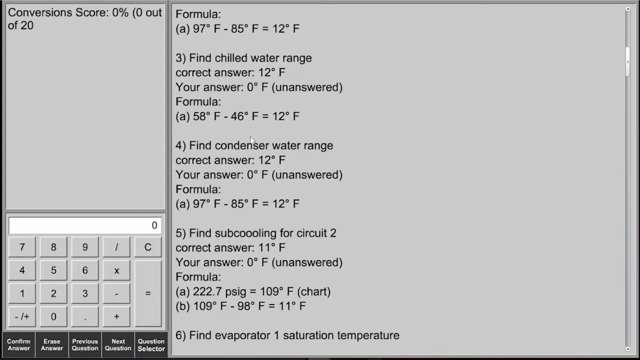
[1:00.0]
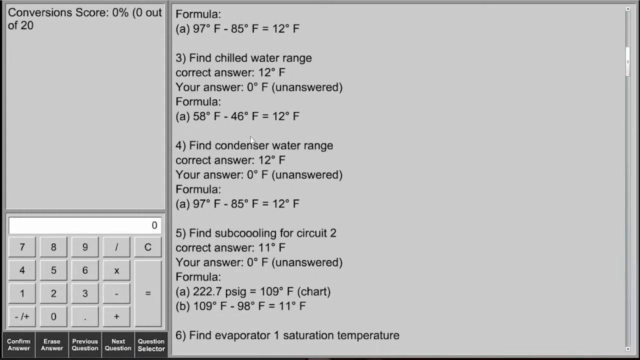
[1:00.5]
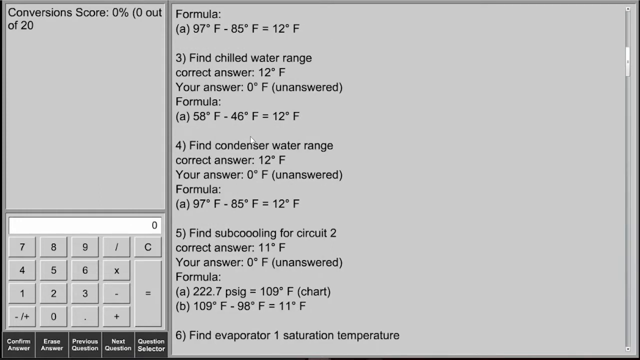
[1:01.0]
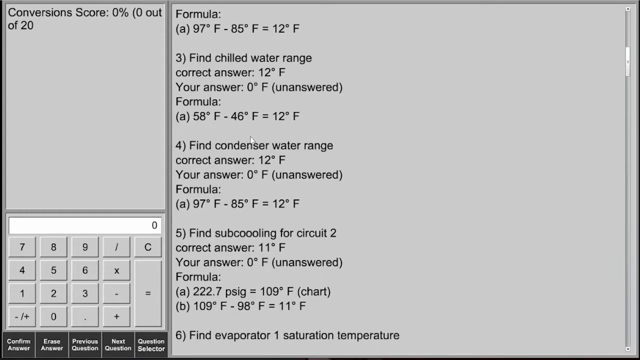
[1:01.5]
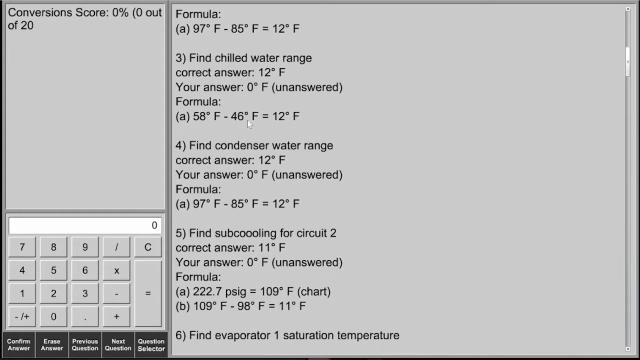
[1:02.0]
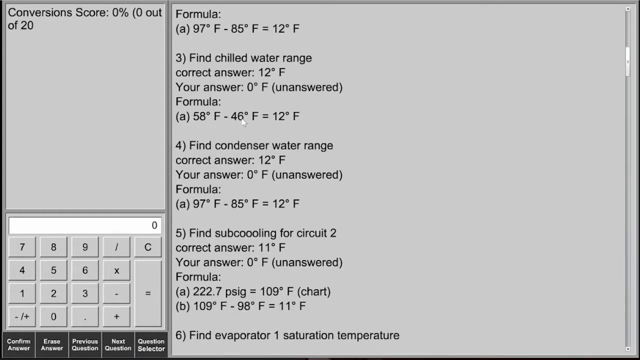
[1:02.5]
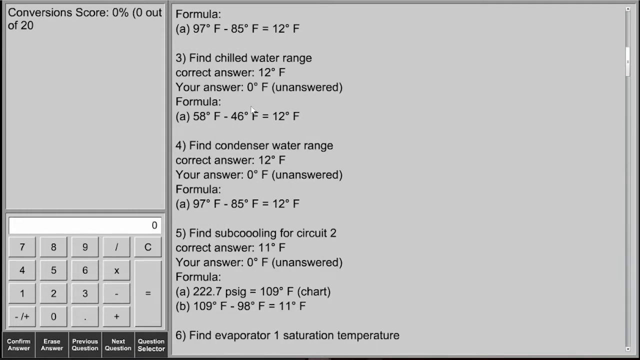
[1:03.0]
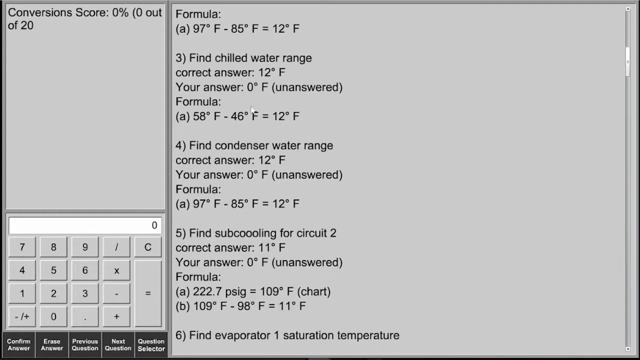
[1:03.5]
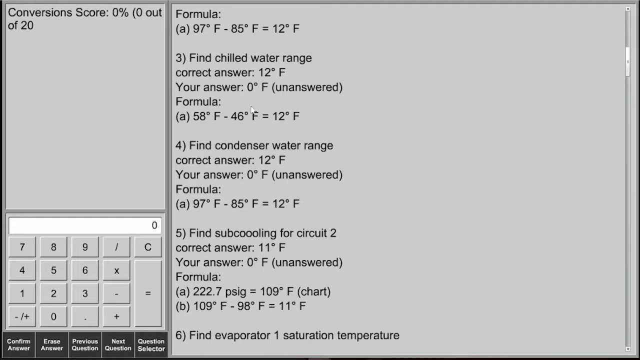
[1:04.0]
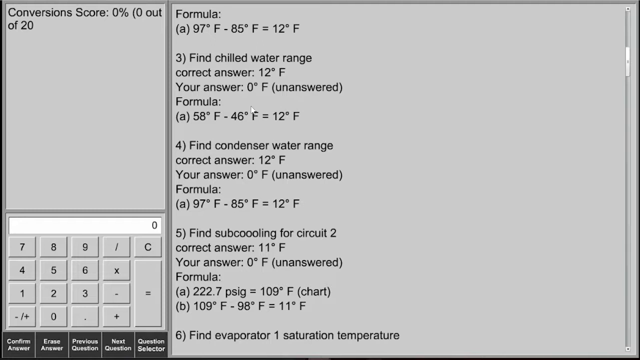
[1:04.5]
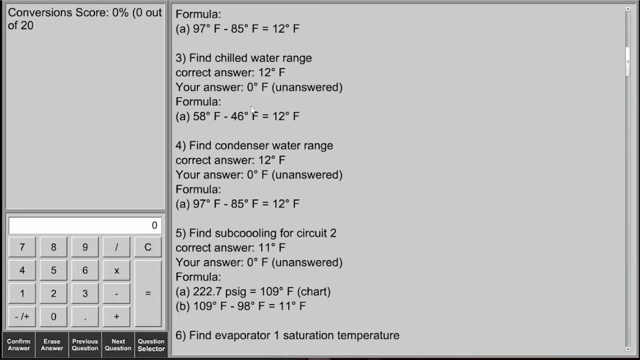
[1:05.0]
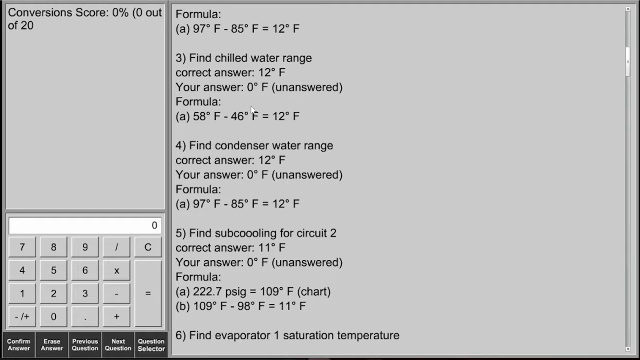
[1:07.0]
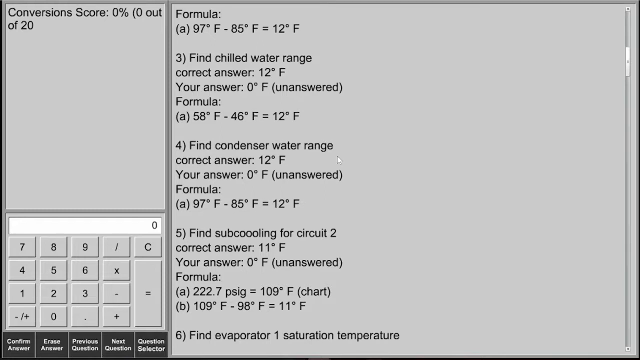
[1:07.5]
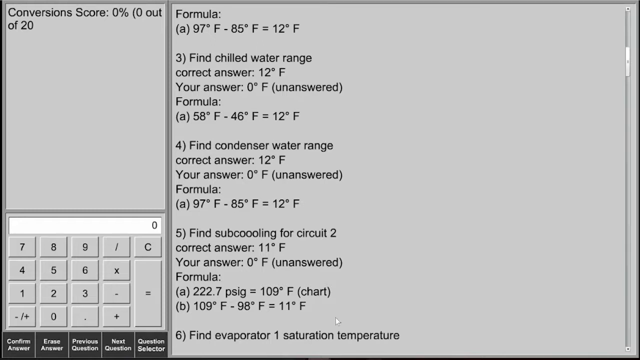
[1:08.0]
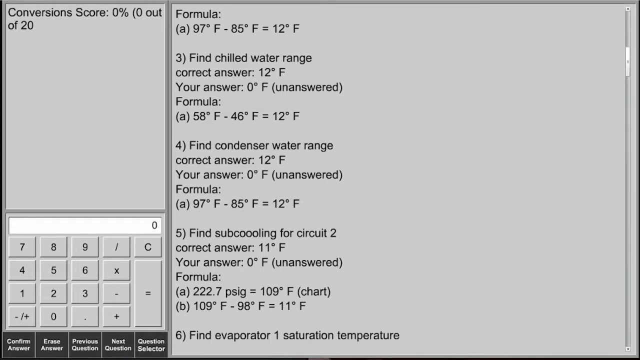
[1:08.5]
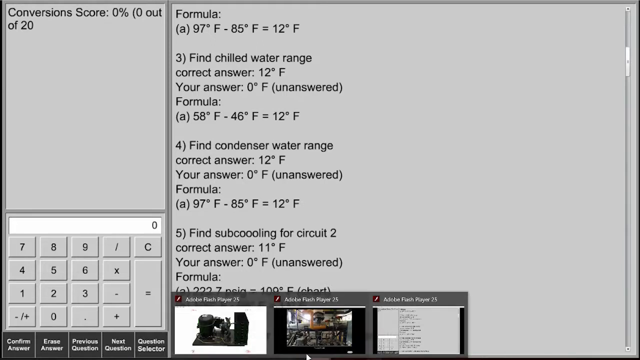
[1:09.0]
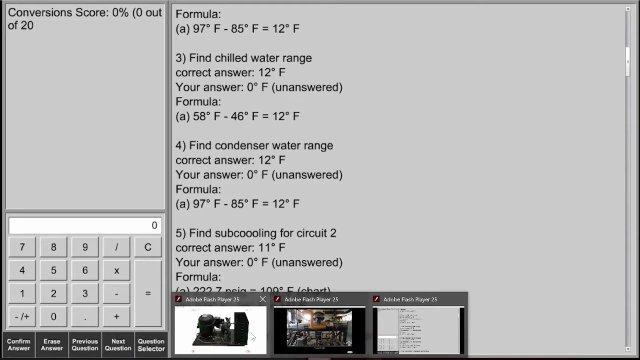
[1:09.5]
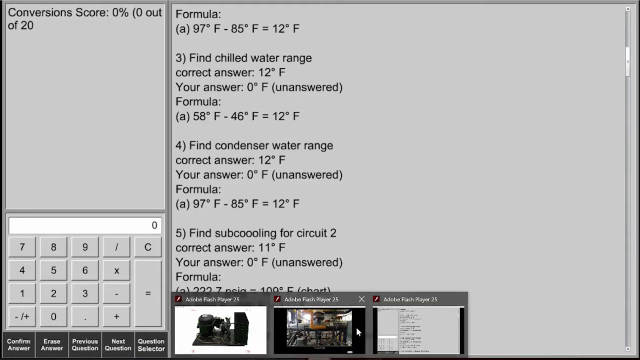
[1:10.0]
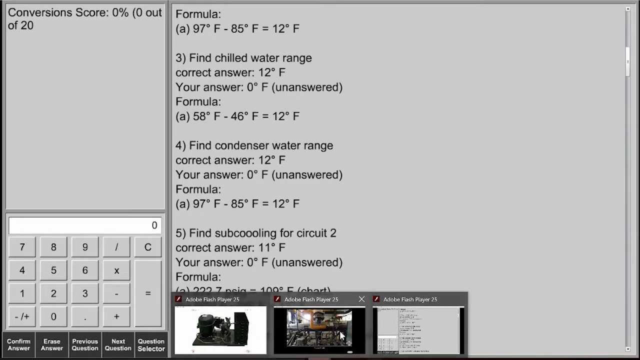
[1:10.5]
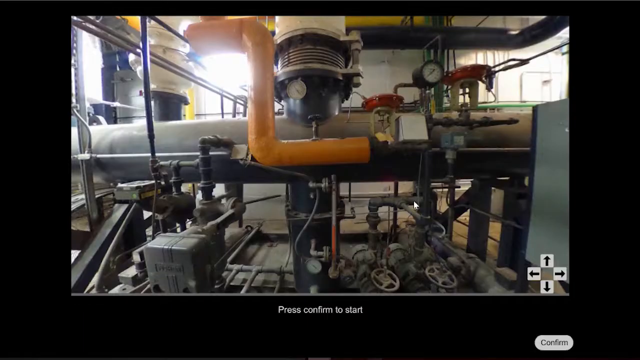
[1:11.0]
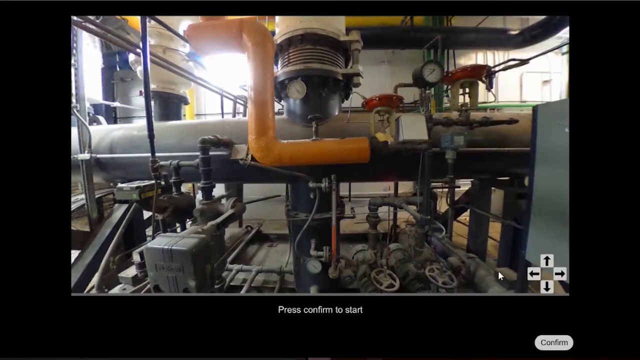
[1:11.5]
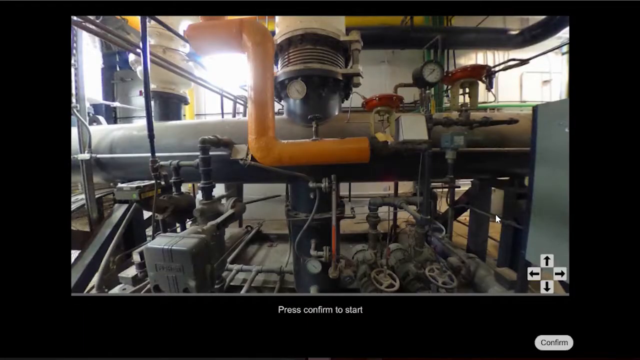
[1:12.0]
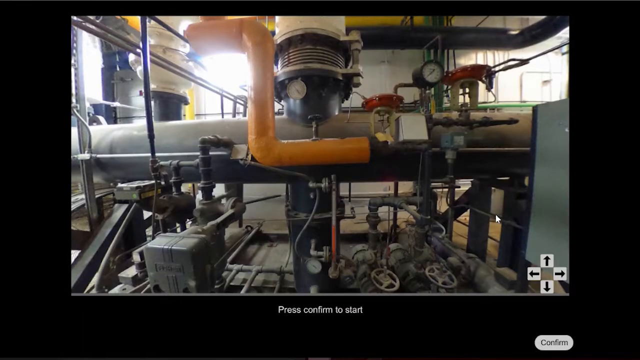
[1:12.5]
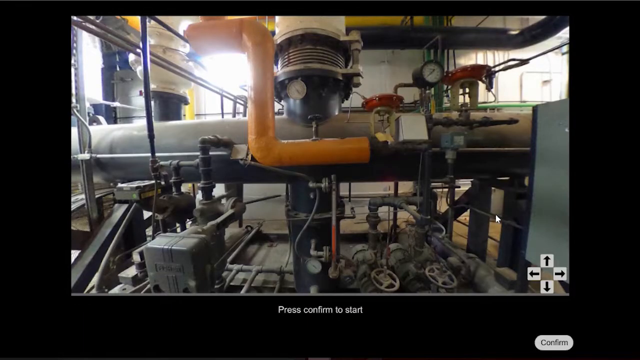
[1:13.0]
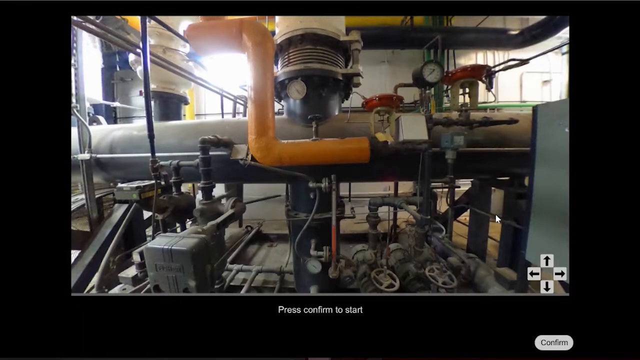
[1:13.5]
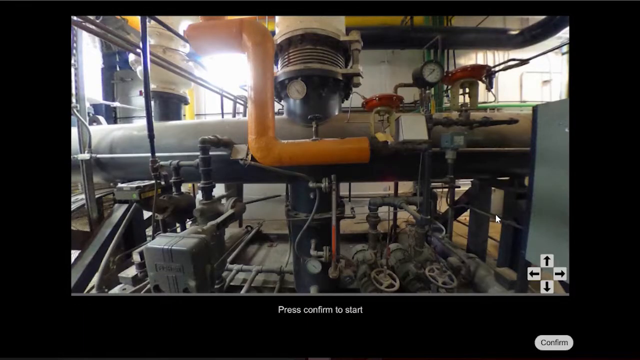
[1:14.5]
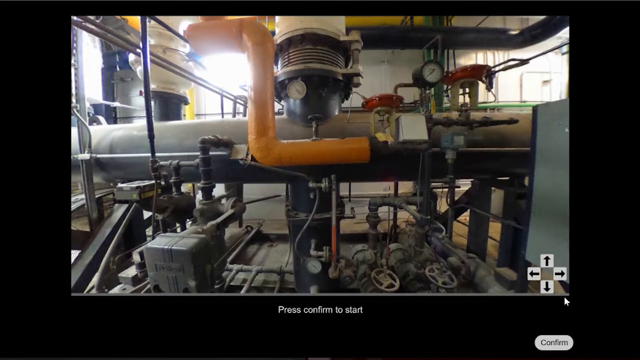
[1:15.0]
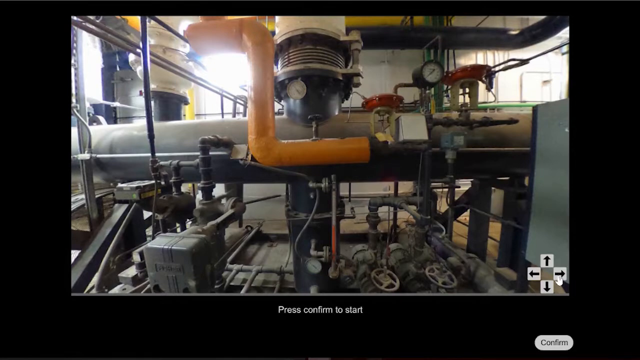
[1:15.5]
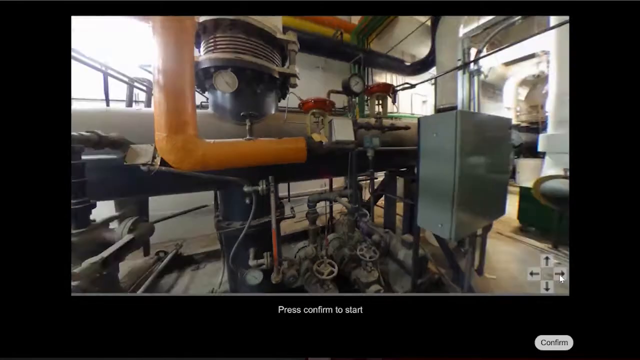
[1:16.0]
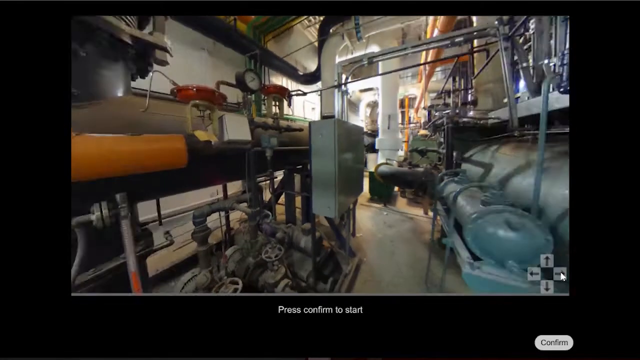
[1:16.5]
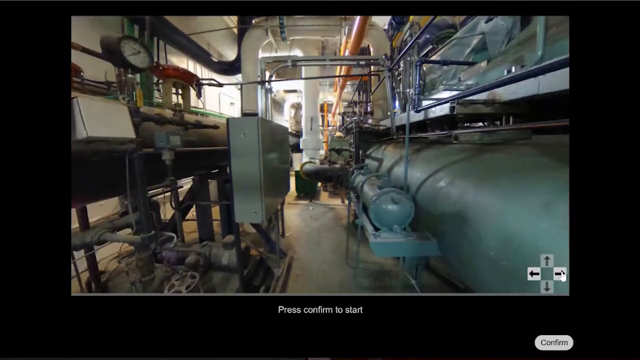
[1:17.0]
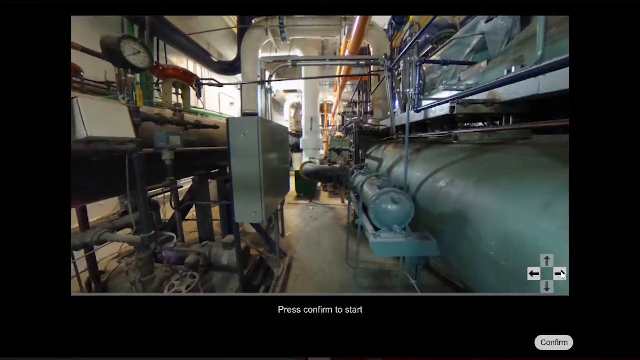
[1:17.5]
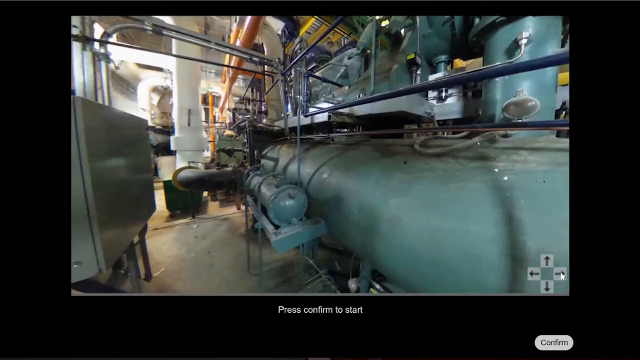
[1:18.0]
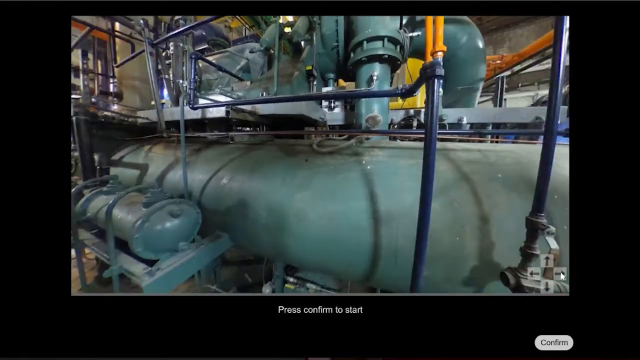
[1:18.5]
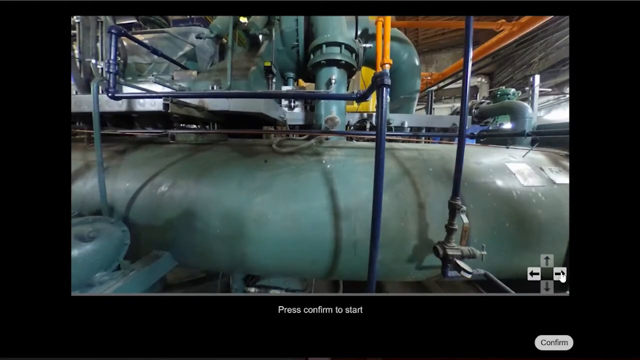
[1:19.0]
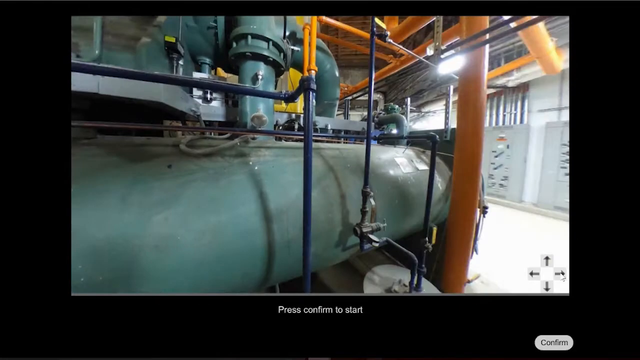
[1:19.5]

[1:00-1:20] The test screen shows the Conversions score of 0%, 0 out of 20 questions. Beneath that section at the bottom of the display is a calculator, and a slightly rectangular box to the right, as tall as the two boxes on the left, holds the list of questions that have been answered, starting with part of formula two. The user briefly scrolls over something at the bottom that changes focus, but it is hard to see because it is grayed out with a progress bar. The user clicks on what now shows as a picture of the machinery, with directional arrows in the bottom right. Several pipes appear in the image, with gauges and valves to be turned. Using the directional arrows, the user pans the view to the right, showing a different long view of the unit and of a second unit next to it off to the right, so the original unit is on the left and the new one on the right. The view continues all the way around, showing lots of gears, and then returns to the chart of questions to be answered for conversions.